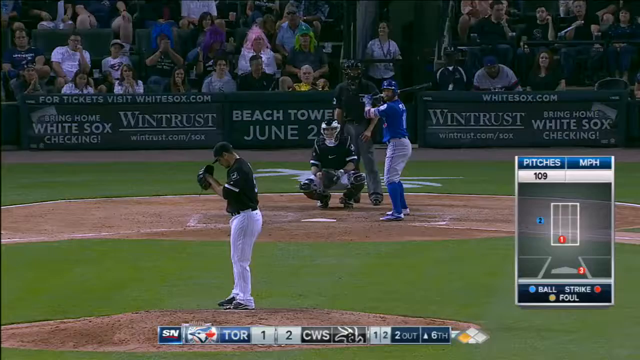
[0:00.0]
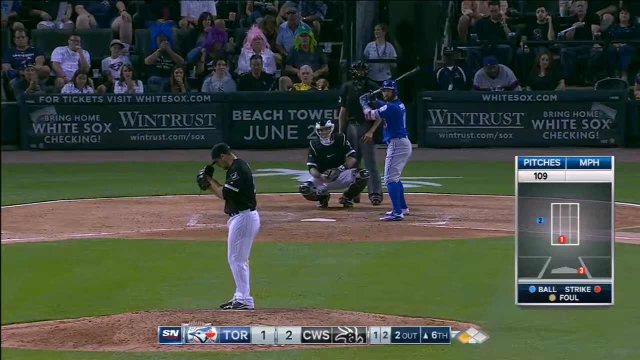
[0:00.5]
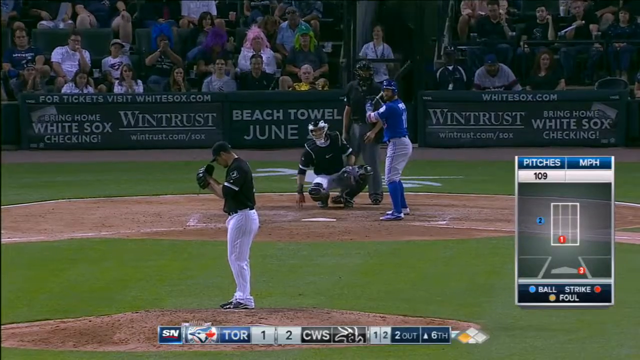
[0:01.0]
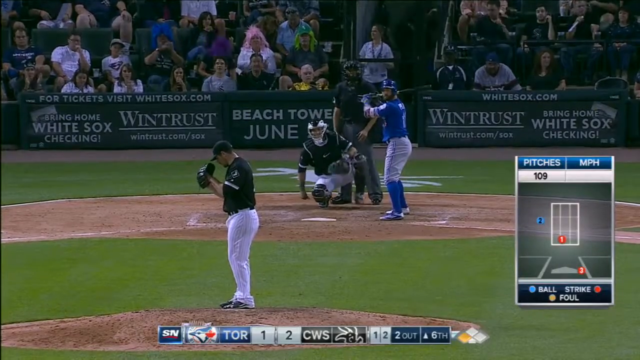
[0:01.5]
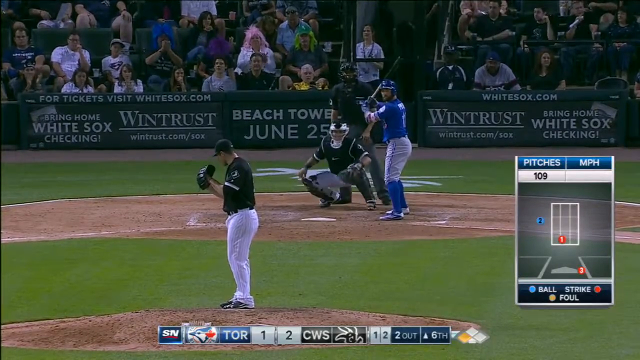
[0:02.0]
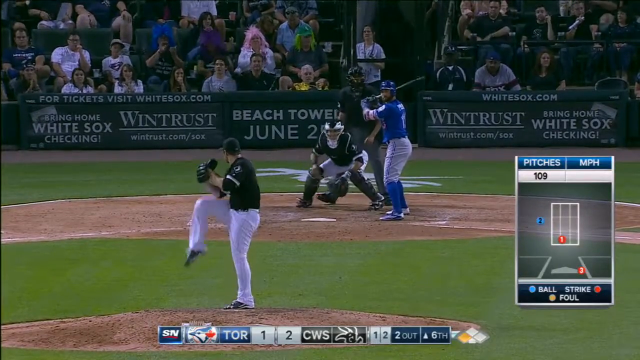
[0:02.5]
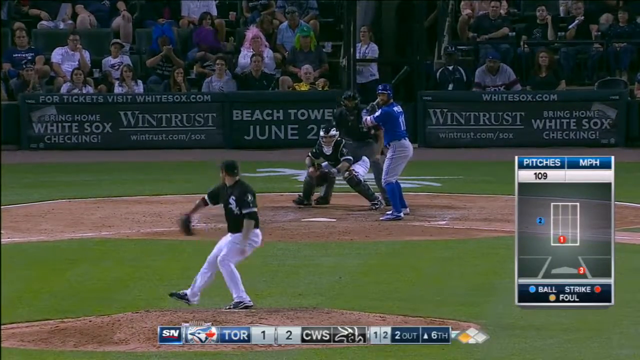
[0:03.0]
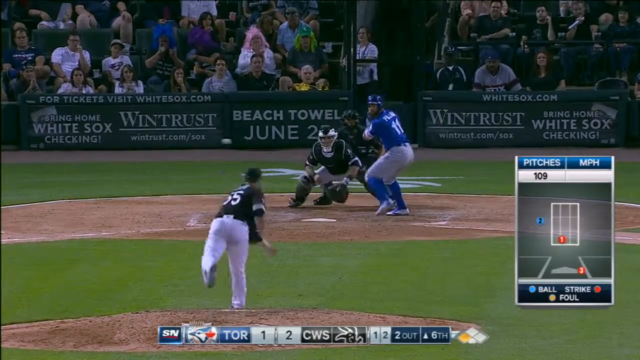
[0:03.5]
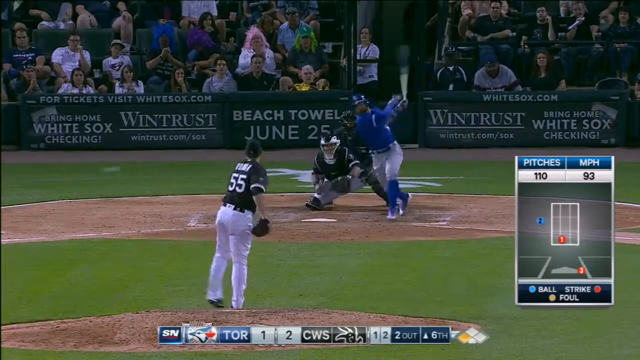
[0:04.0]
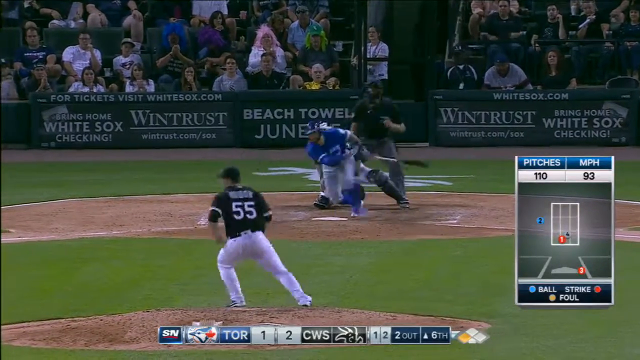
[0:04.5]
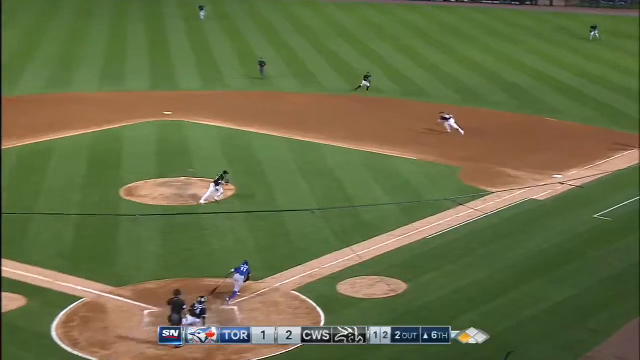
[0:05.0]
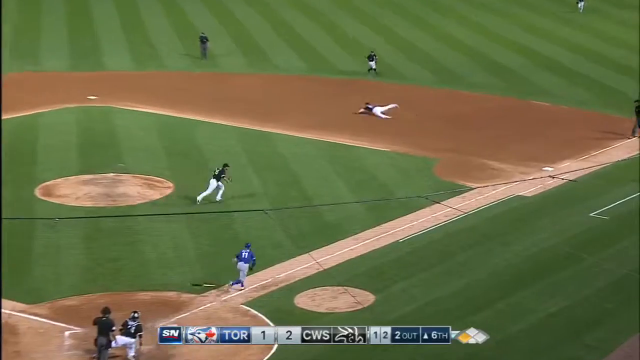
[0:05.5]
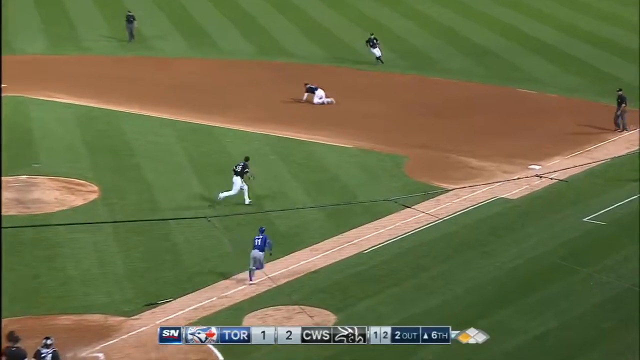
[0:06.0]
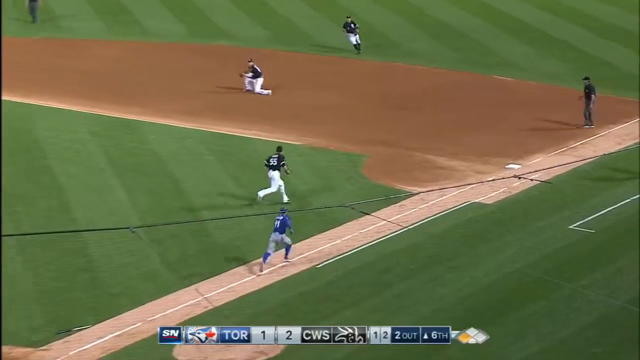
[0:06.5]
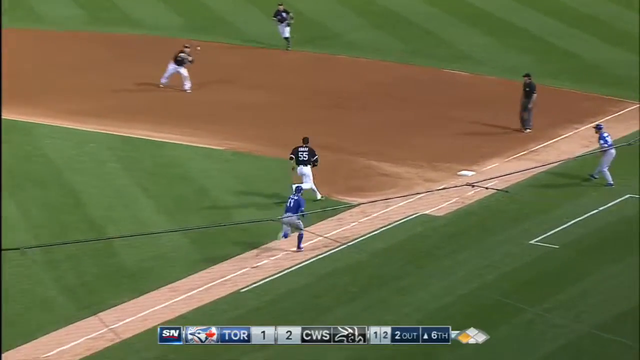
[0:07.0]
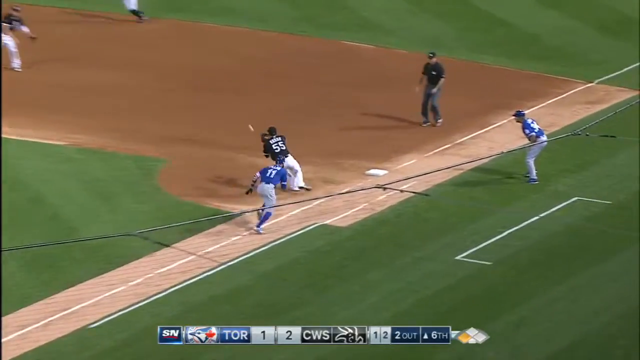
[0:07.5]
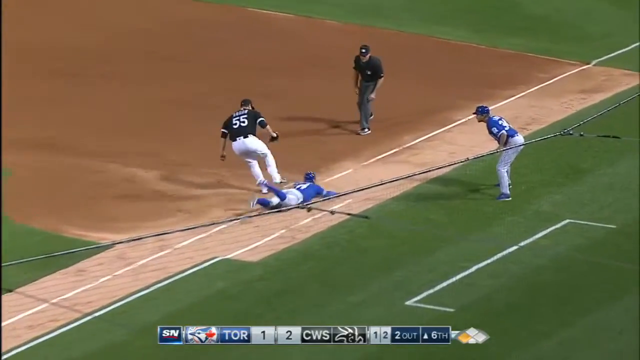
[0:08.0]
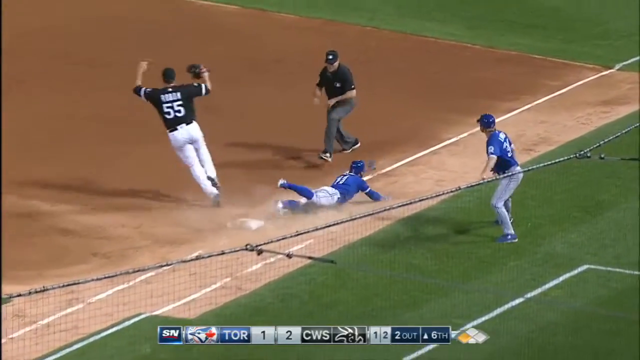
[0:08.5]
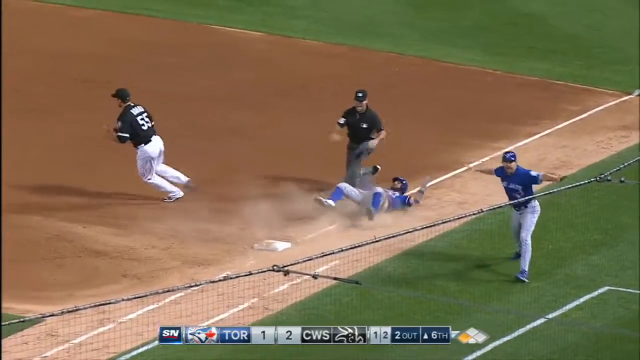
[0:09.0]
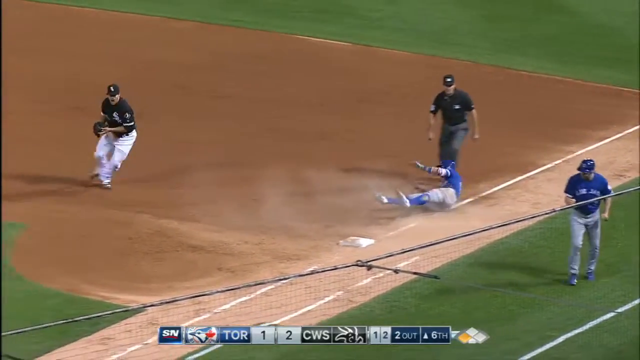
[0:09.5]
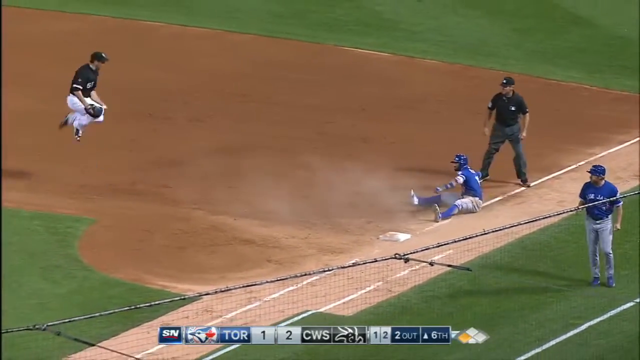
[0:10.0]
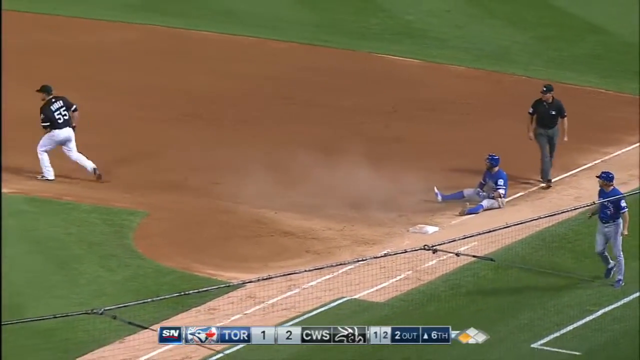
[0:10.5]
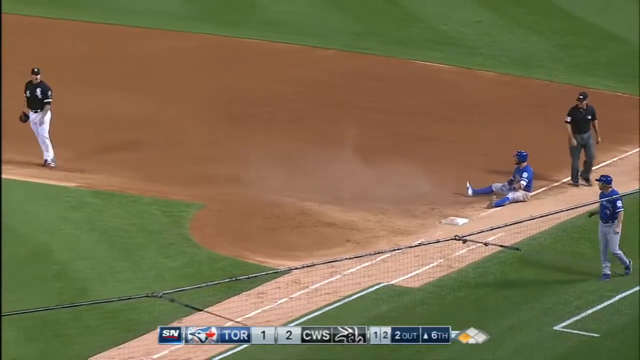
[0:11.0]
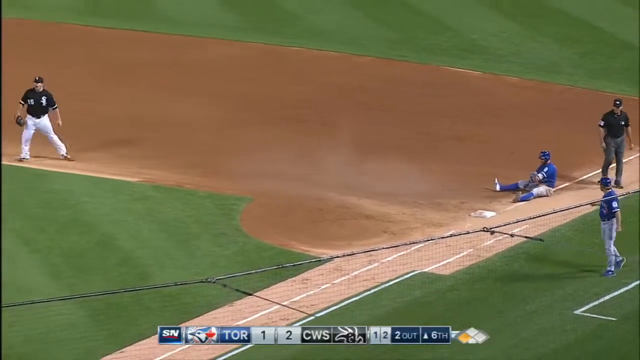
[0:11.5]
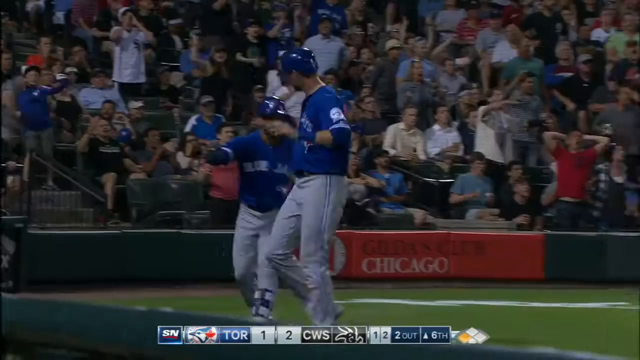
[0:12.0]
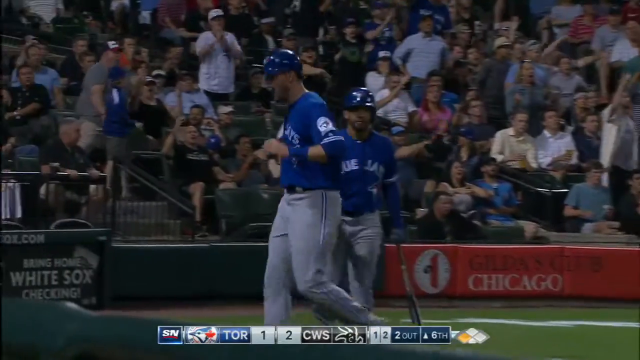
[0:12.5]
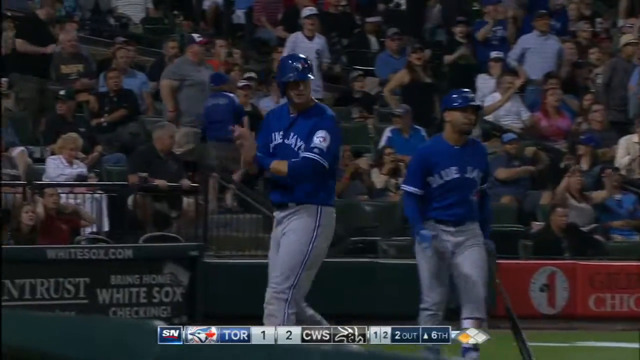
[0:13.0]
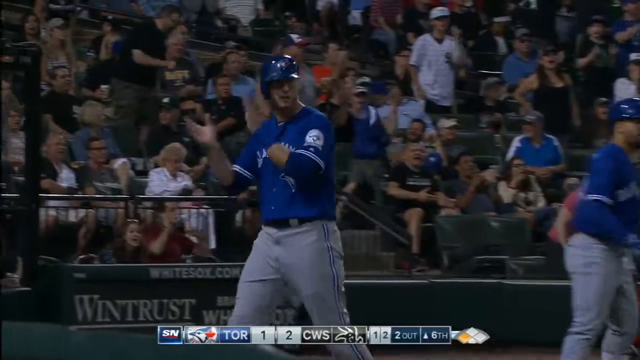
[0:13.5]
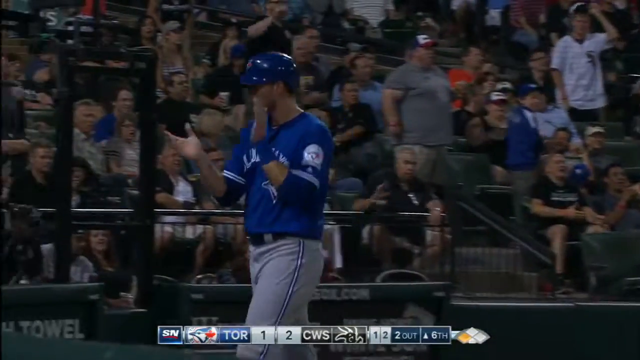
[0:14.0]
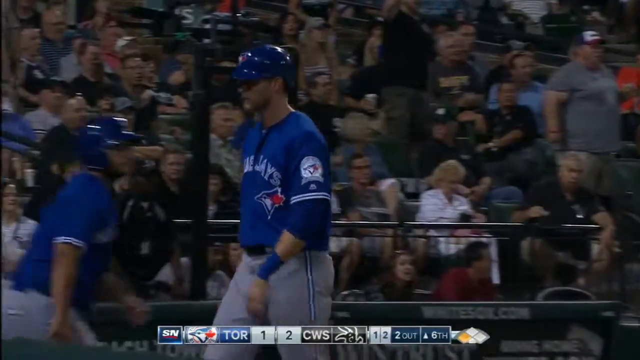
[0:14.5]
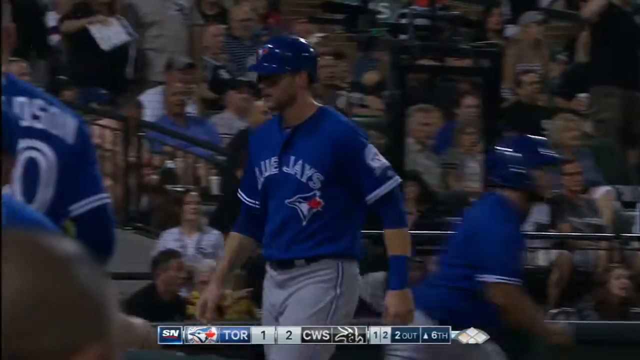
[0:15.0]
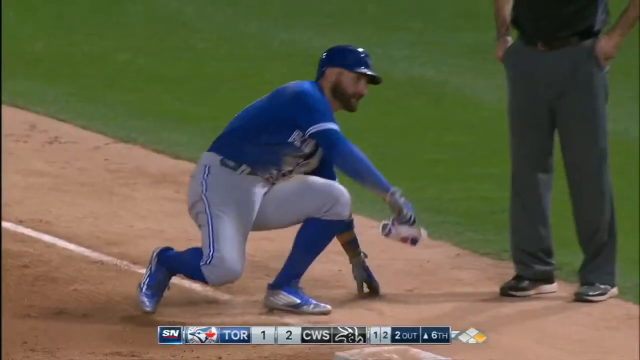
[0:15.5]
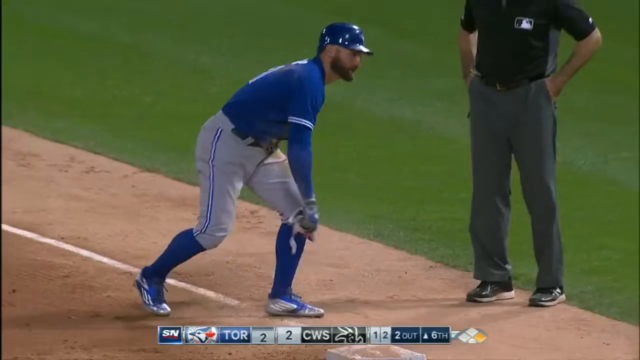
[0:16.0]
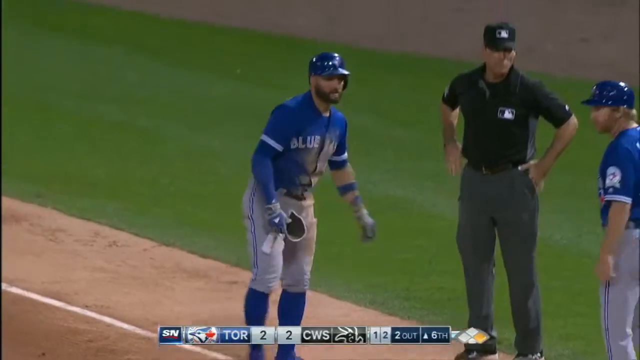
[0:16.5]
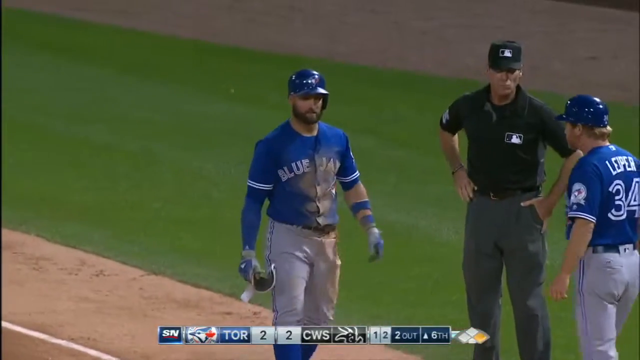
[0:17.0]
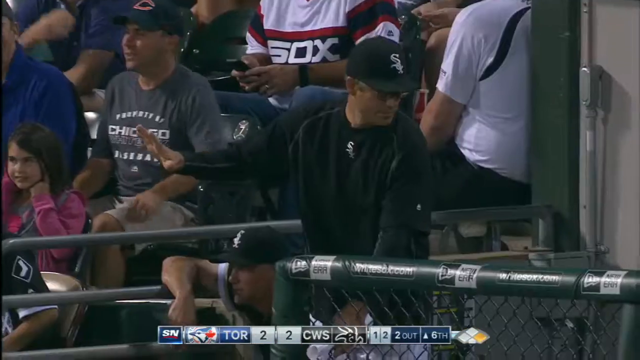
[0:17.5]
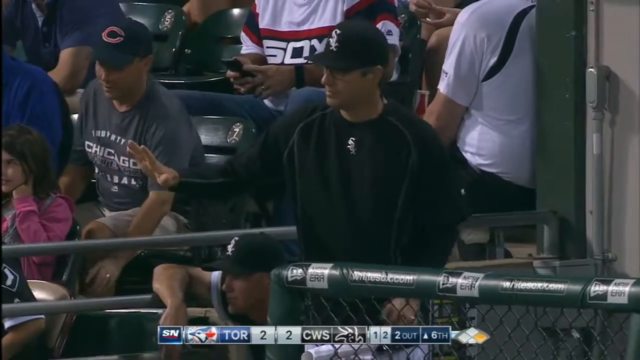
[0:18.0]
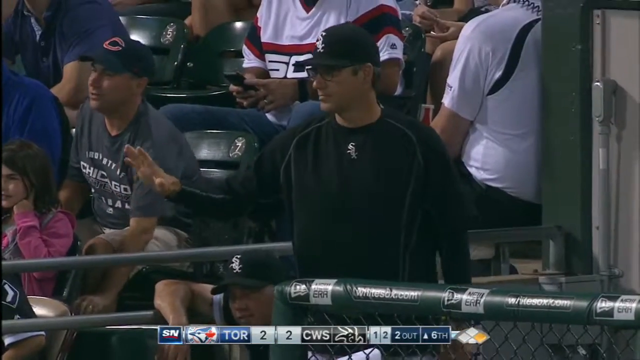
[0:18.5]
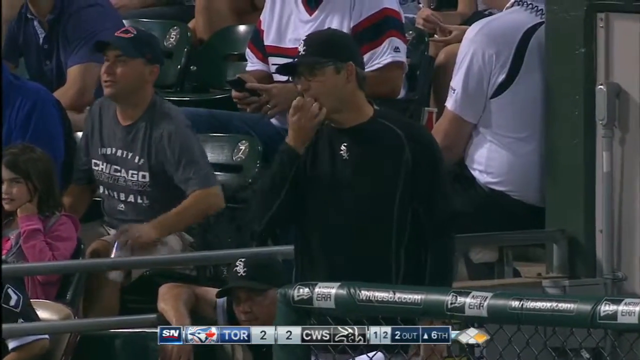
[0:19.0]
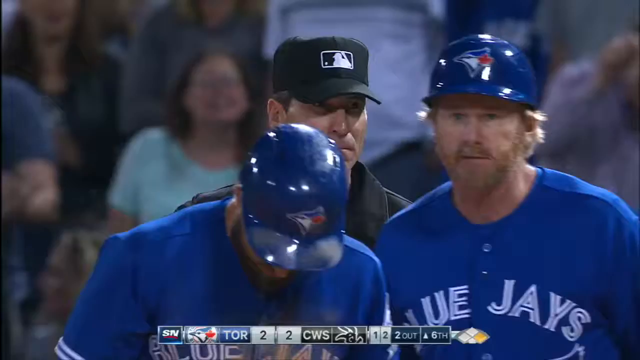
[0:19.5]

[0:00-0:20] Baseball action is shown from the center field camera at the White Sox stadium in Chicago. A left-handed pitcher in a black jersey stands on the mound, about to deliver to a right-handed batter in a blue jersey. The catcher is set on his right knee behind the plate, and the umpire behind him stands more or less upright with his hands resting on his thighs. About 60 fans are in the expensive seats in the background, and there is a notice that beach towel night is coming up sometime in June, June 20-something, in Chicago. The pitcher delivers and the batter hits a ground ball. The first baseman dives for the ball, backed up by the second baseman. He catches it and throws to the first baseman, number 55. The umpire approaches and calls the player safe. The first baseman takes offense and jumps up and down angrily. The scene then changes to a Toronto Blue Jays player clapping his hands excitedly as he moves in front of the stands from the right portion of the frame toward the left. Next, the Toronto first baseman moves his arms and stands up. What may be a Chicago White Sox coach, wearing a black sweatshirt and a black hat, stands at the edge of the dugout with his right hand touching his lips.